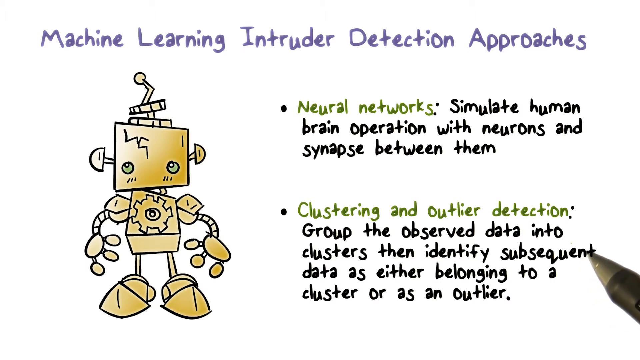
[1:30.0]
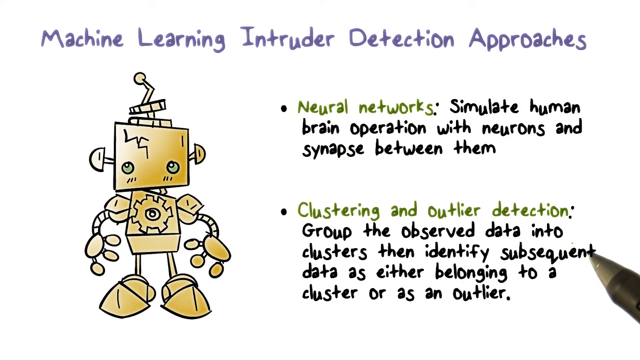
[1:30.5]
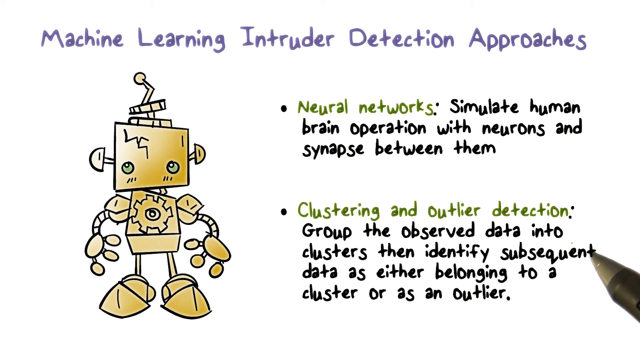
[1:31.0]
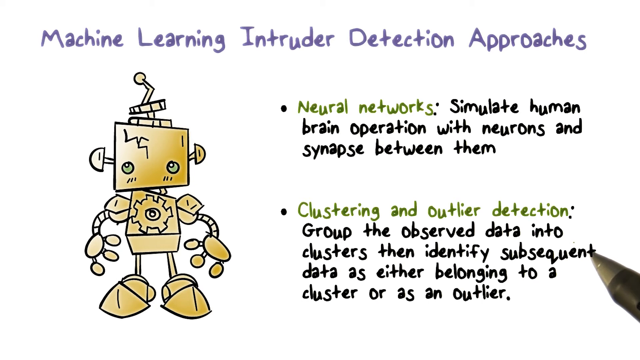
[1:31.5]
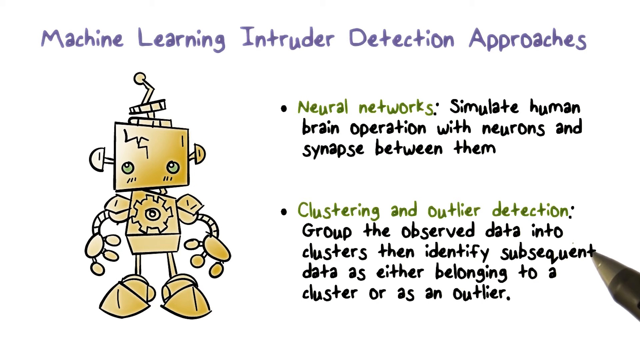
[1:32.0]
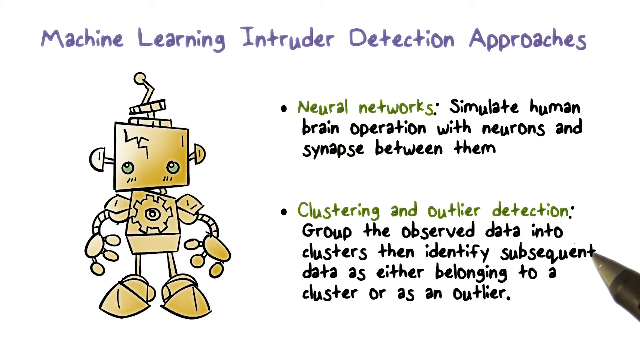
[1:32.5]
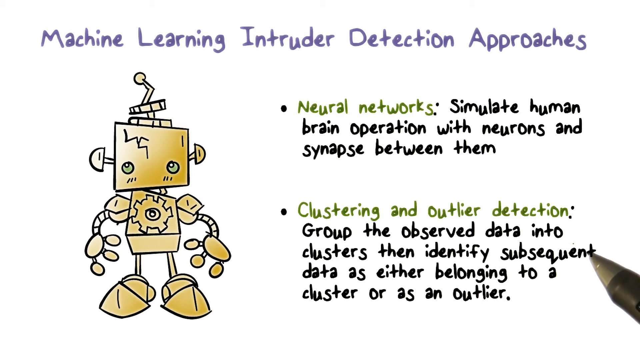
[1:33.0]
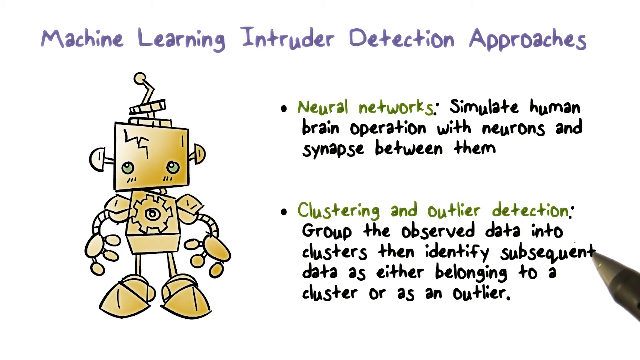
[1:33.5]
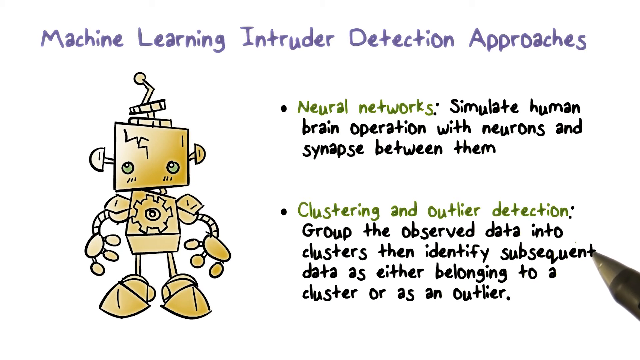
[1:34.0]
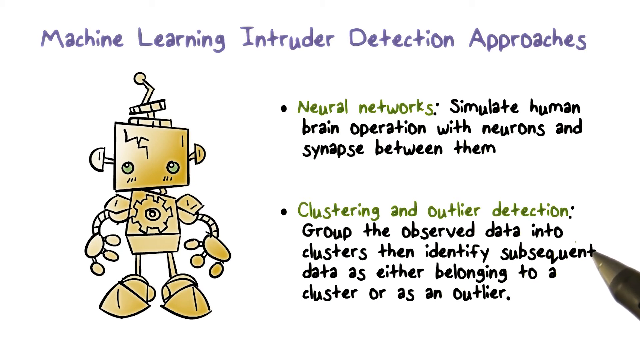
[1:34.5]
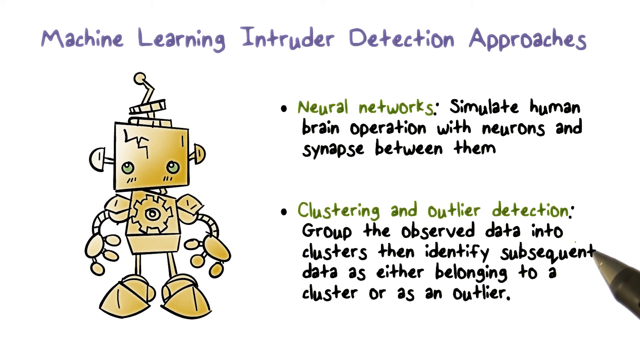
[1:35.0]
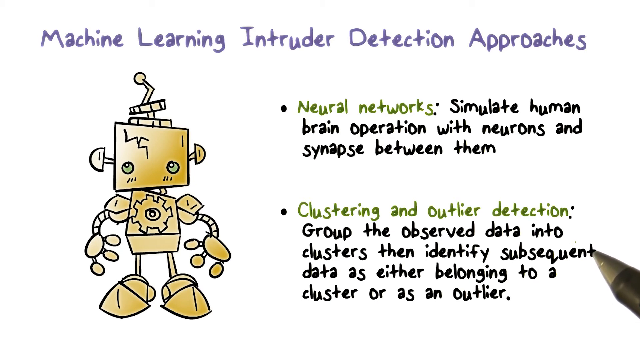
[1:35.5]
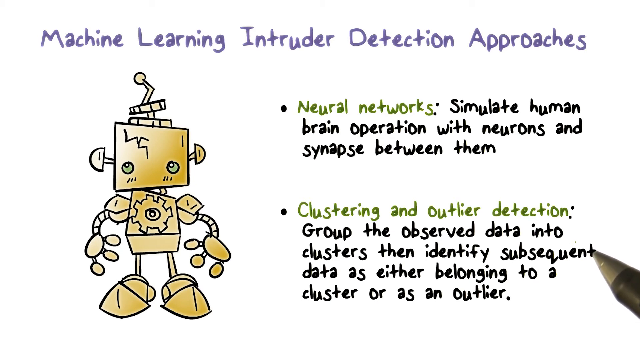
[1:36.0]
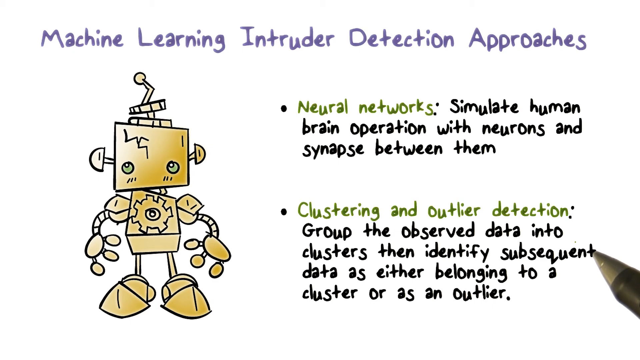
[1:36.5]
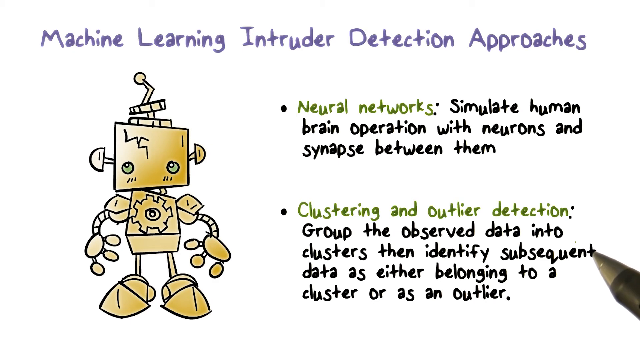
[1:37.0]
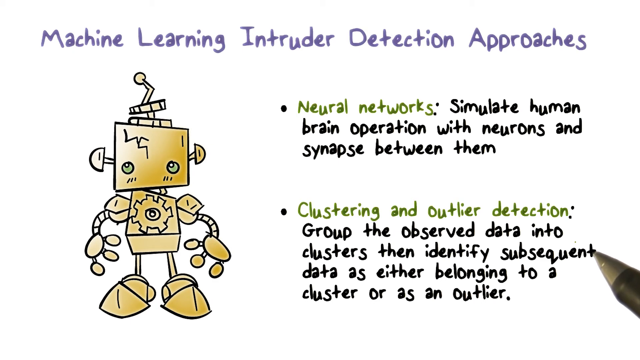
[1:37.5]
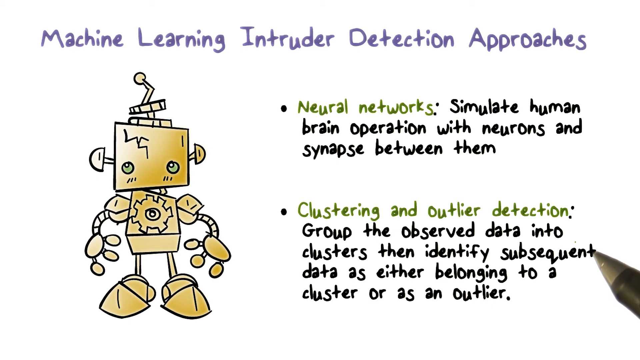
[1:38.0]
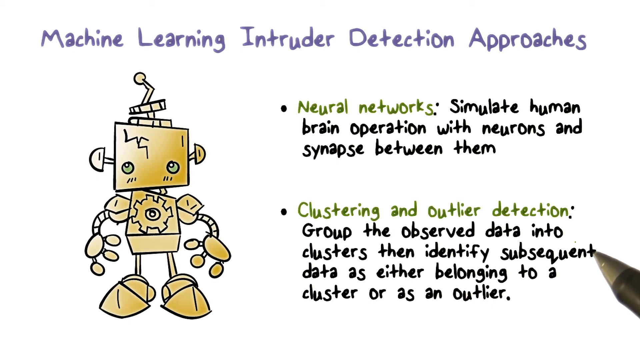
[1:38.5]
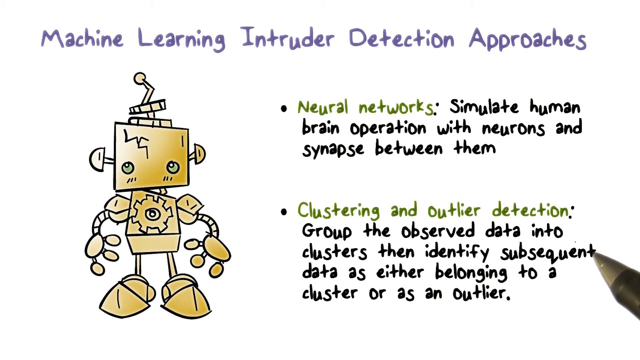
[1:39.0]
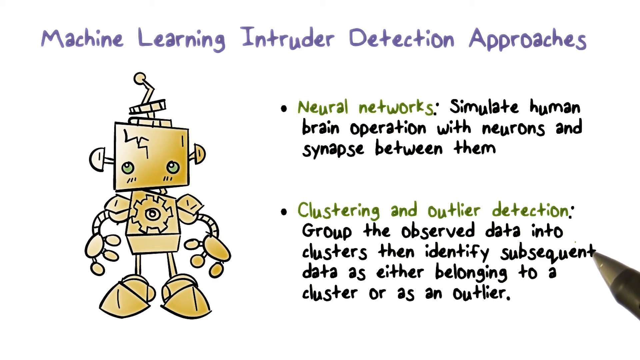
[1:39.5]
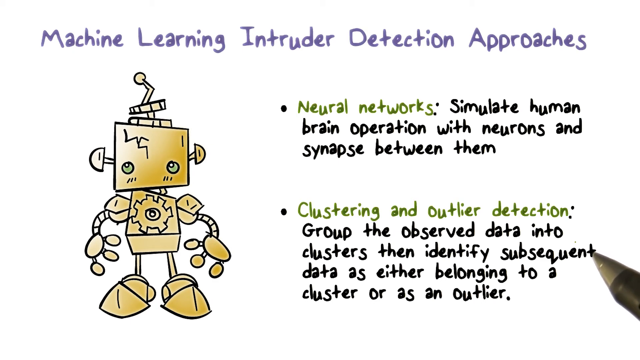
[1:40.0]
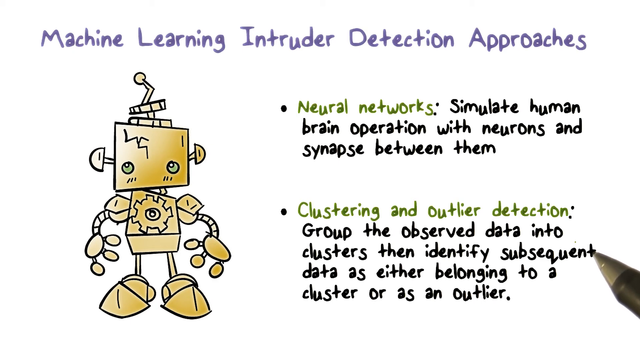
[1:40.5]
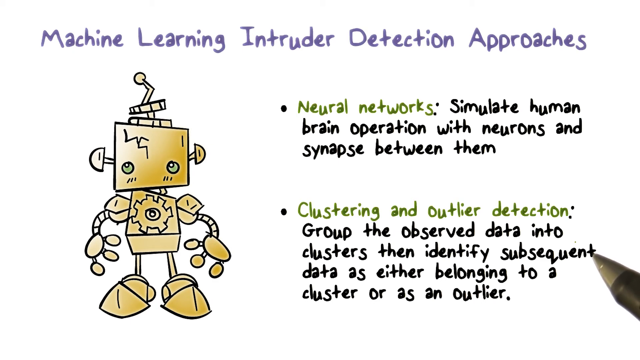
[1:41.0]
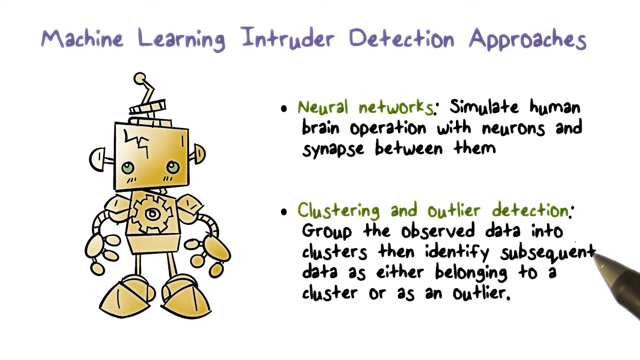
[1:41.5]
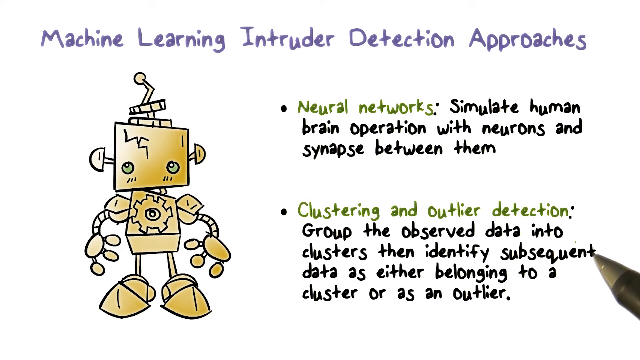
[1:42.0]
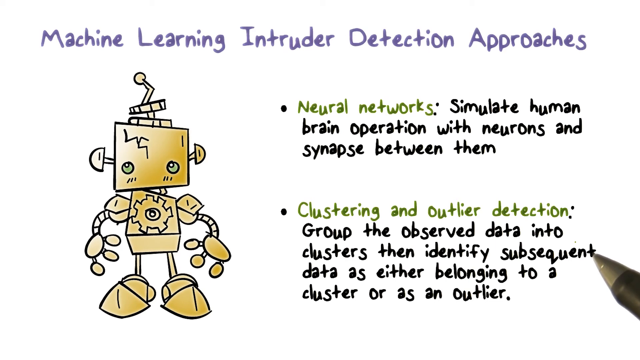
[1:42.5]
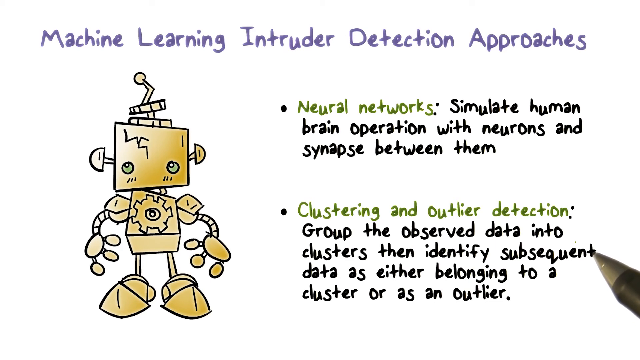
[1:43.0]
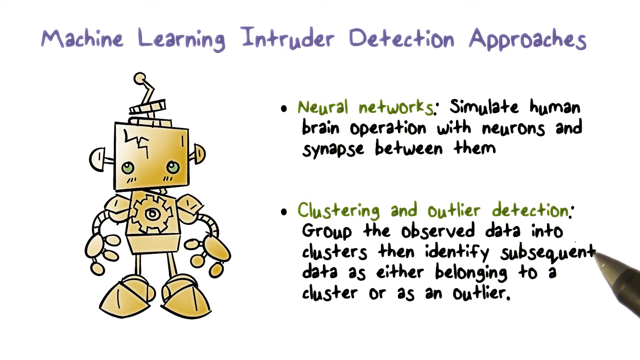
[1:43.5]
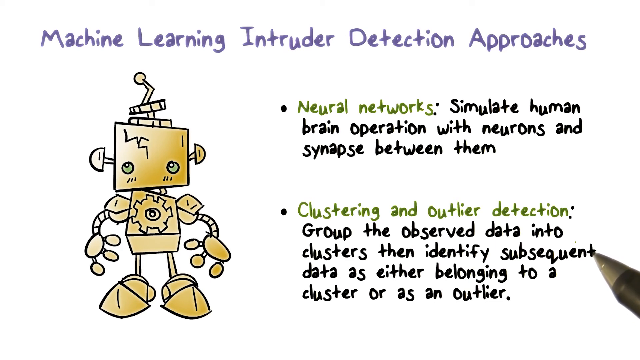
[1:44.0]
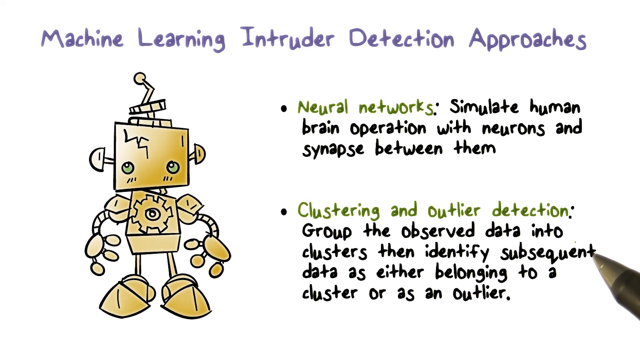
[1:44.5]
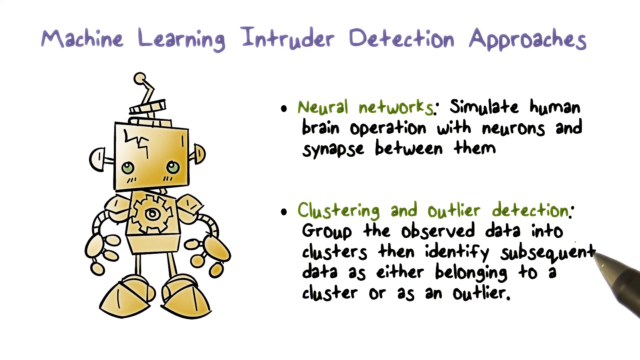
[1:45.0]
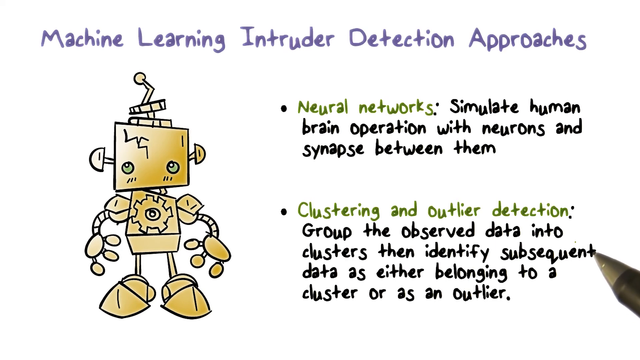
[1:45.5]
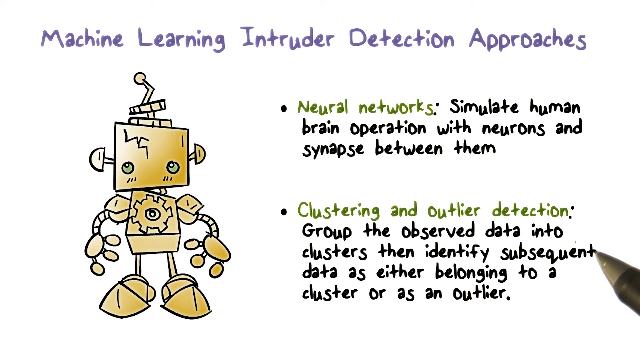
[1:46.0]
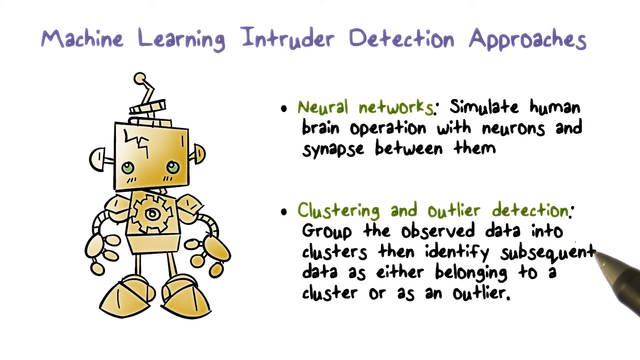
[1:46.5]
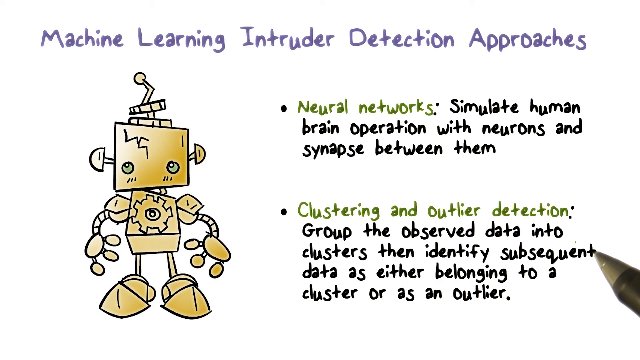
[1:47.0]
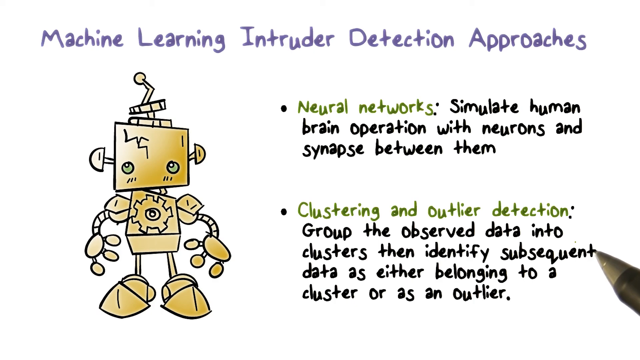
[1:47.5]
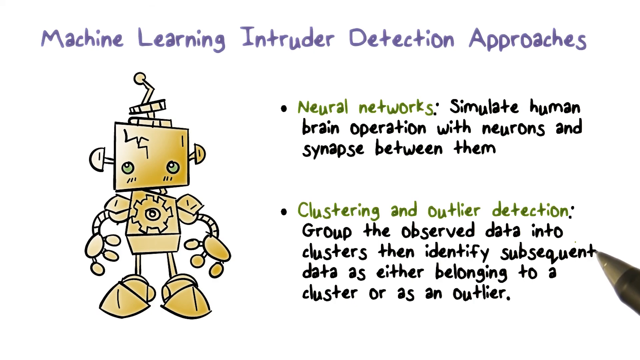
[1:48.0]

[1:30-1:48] The white screen has writing and bullet points on it. One bullet point, on neural networks, reads "simulate human brain operation with neurons and synapses between them," and a second covers clustering and detection: observed data grouped into clusters, identifying "subsequent data as either belonging to a cluster or as an outlier." On the right side, part of the page appears to be turned inward, with a lighter white area that seems folded in toward the letter T. The pen moves slightly as it hovers over the letter T; the area that seemed folded over is actually just blank space where the pen hovers, giving the illusion that the space above is being used when it is not. The whole picture is neatly divided: the words and bullets on the right come in about four inches, with about an inch between the bullet points and the character. The text at the top is about half an inch from the very top and takes up the entire left-to-right area.